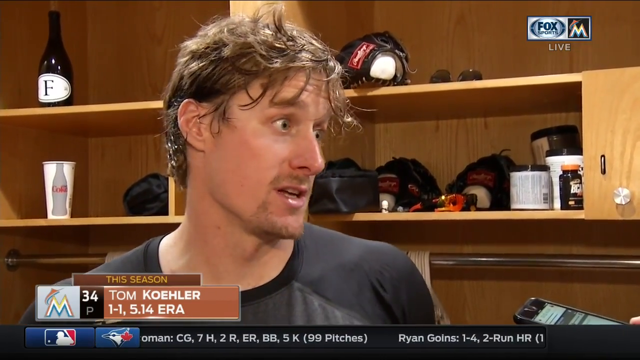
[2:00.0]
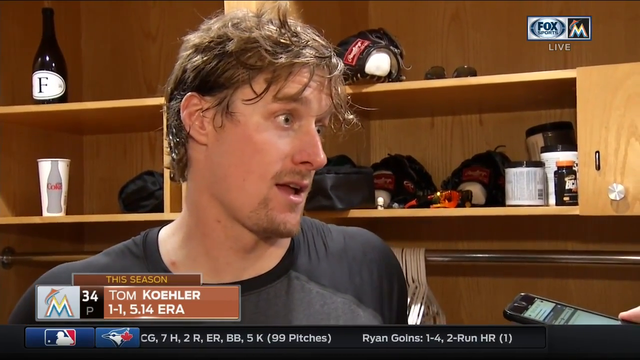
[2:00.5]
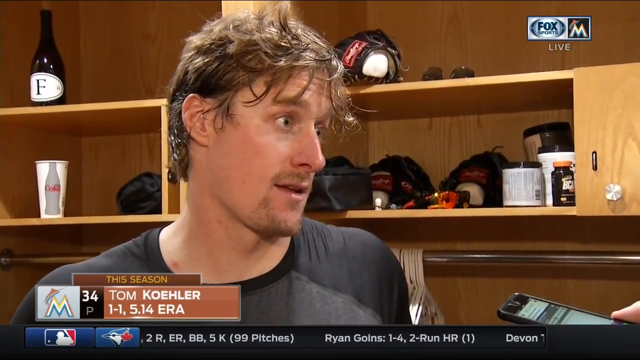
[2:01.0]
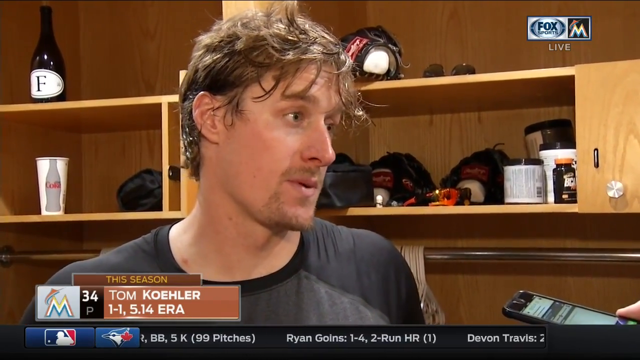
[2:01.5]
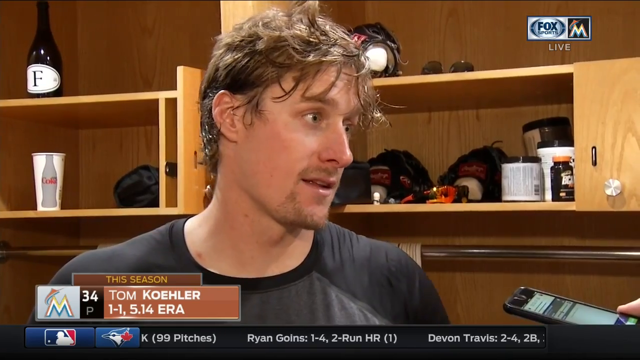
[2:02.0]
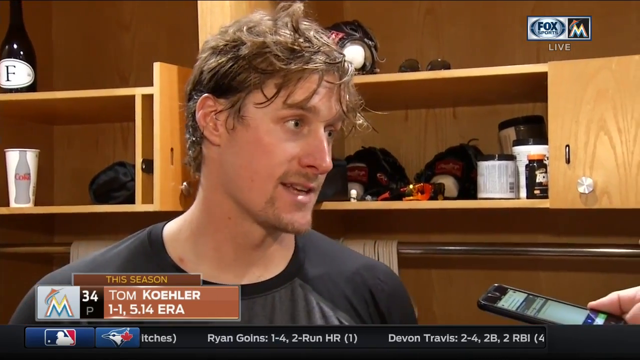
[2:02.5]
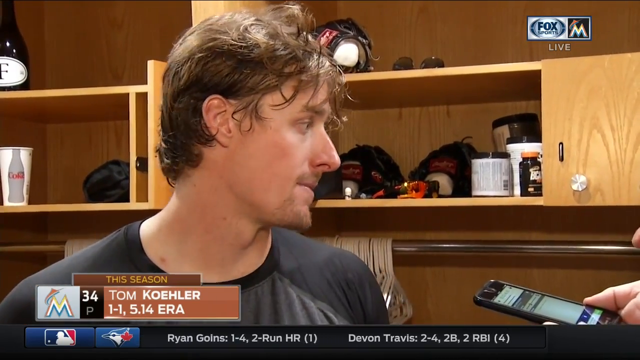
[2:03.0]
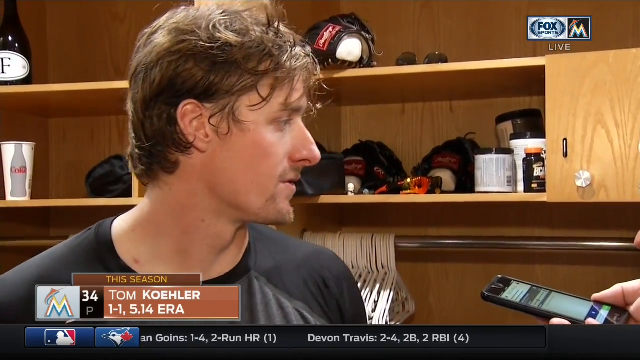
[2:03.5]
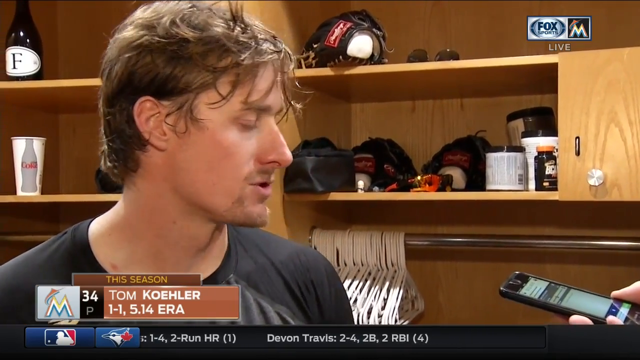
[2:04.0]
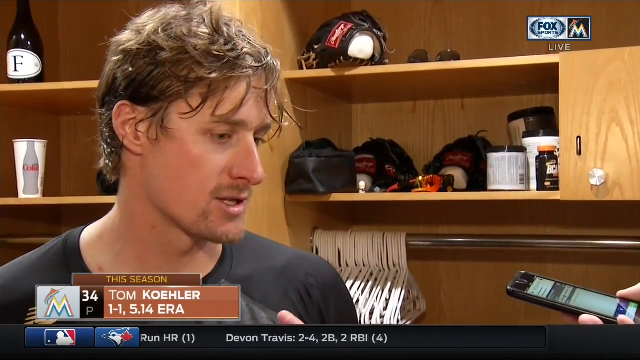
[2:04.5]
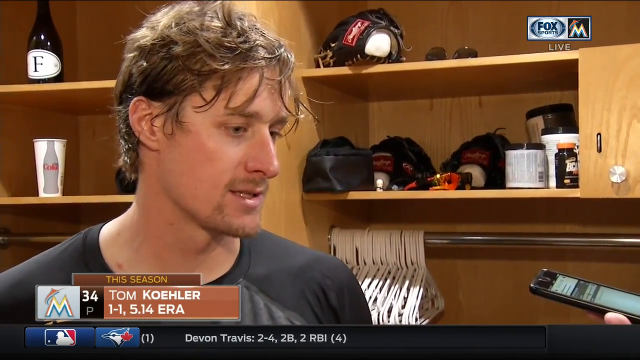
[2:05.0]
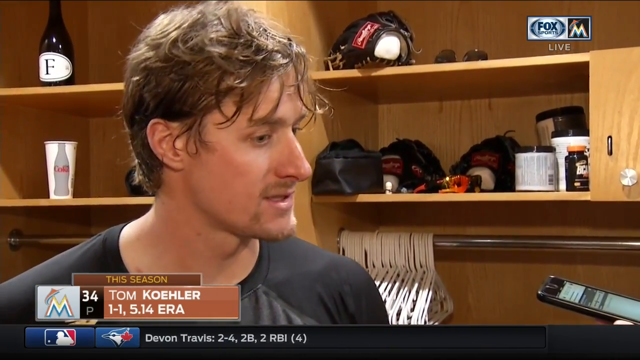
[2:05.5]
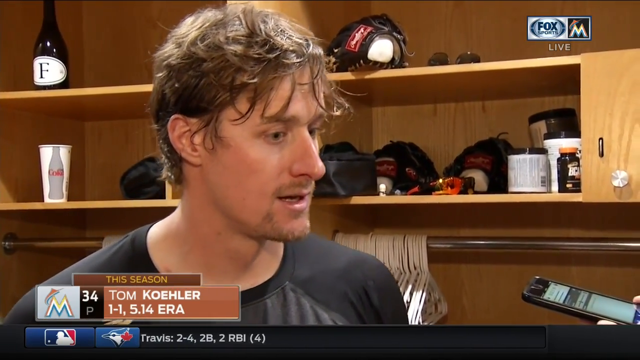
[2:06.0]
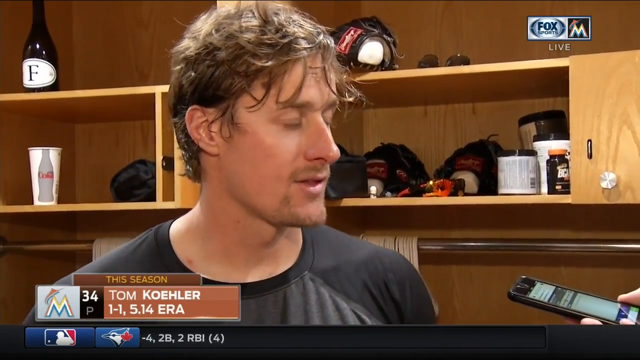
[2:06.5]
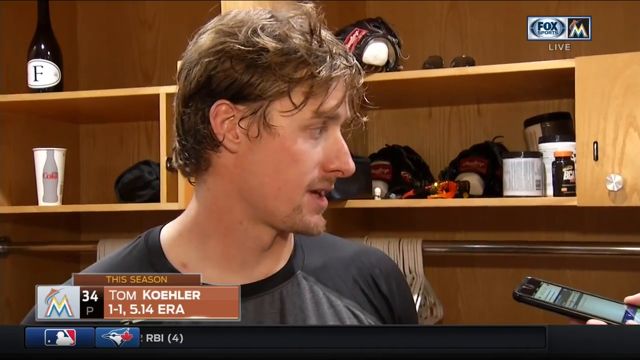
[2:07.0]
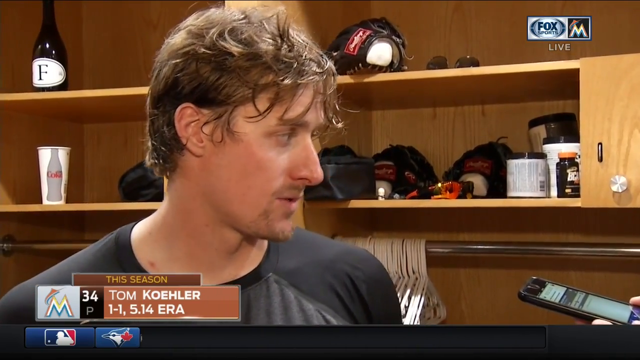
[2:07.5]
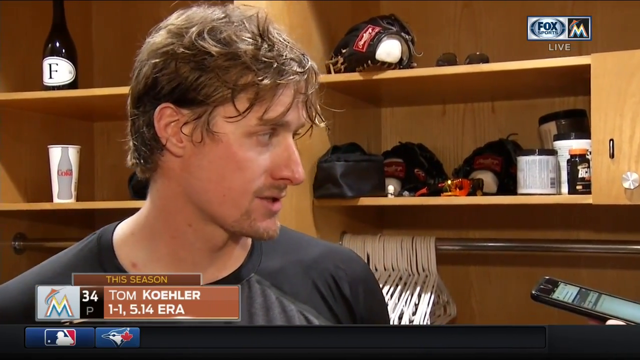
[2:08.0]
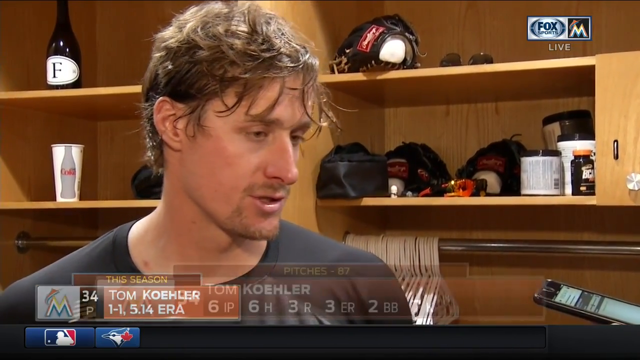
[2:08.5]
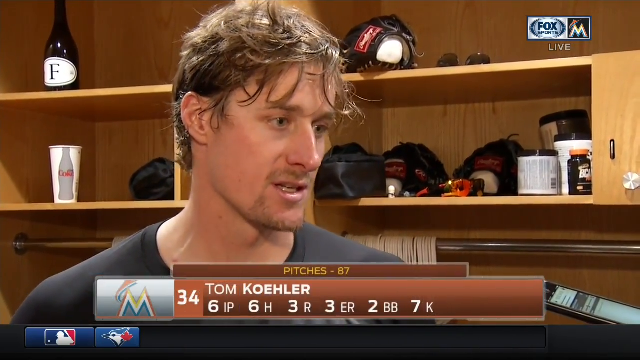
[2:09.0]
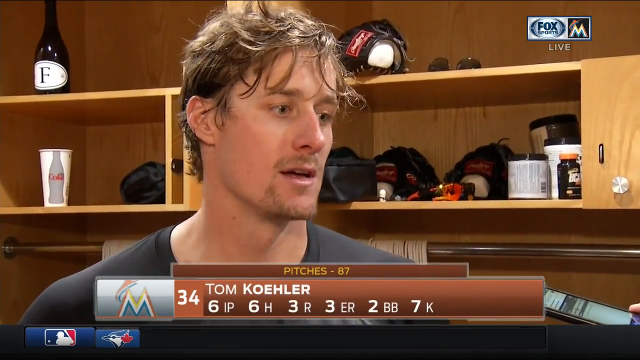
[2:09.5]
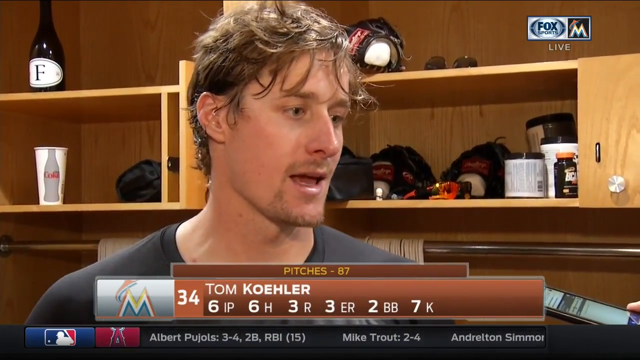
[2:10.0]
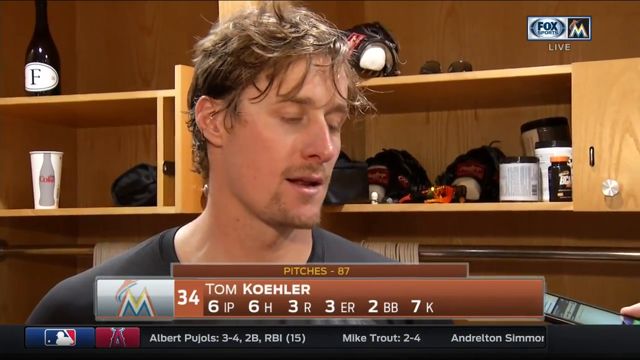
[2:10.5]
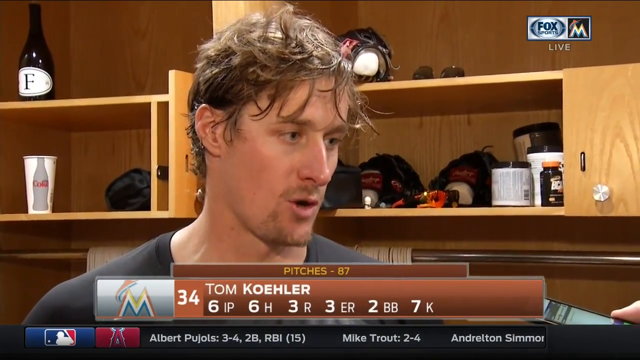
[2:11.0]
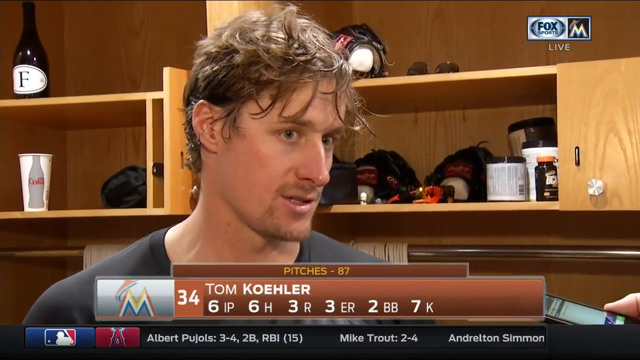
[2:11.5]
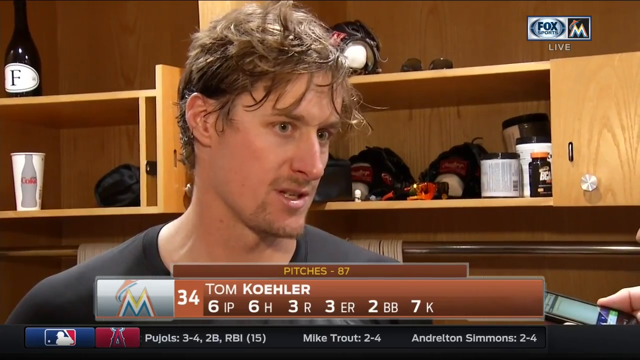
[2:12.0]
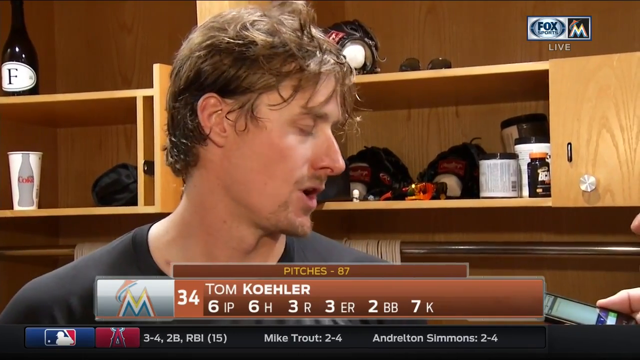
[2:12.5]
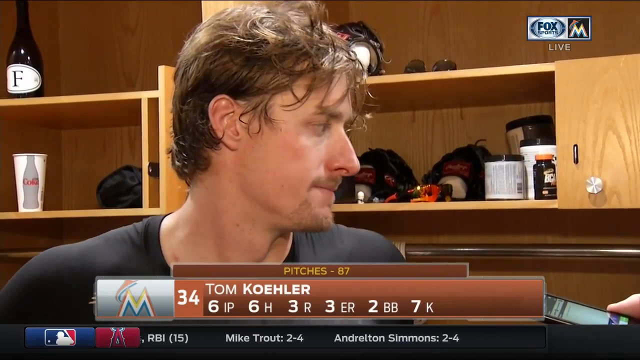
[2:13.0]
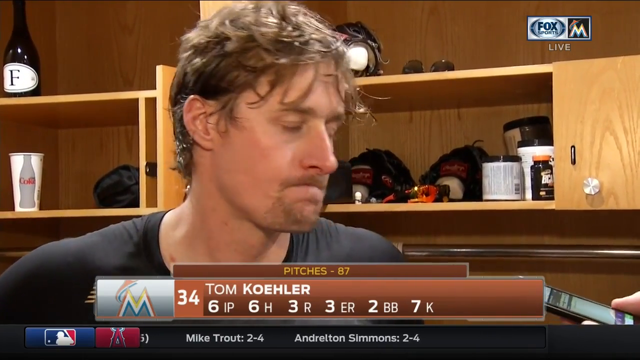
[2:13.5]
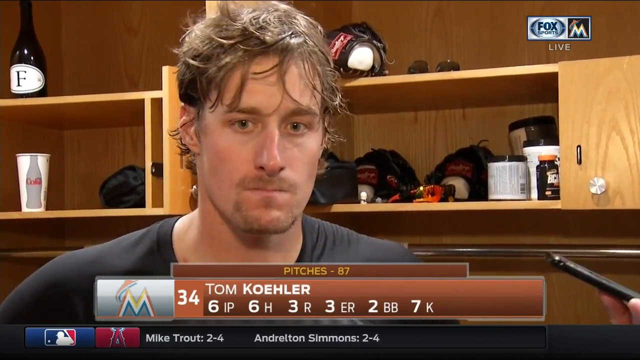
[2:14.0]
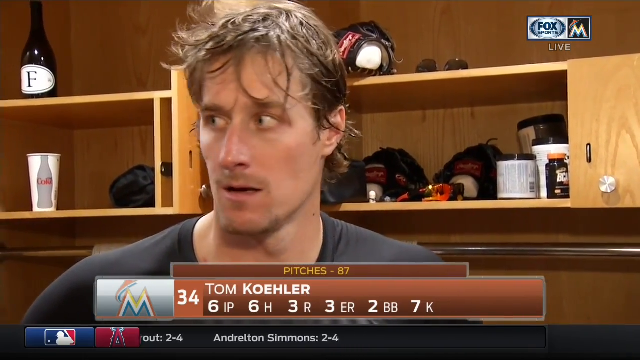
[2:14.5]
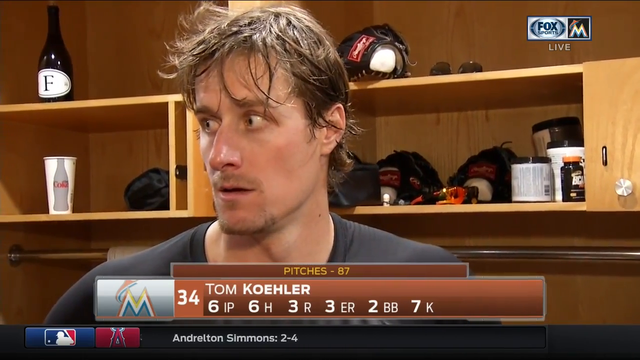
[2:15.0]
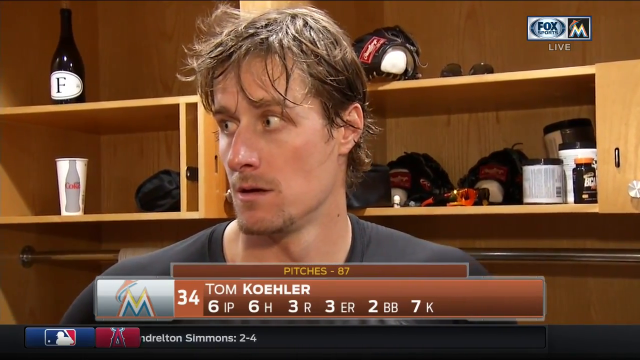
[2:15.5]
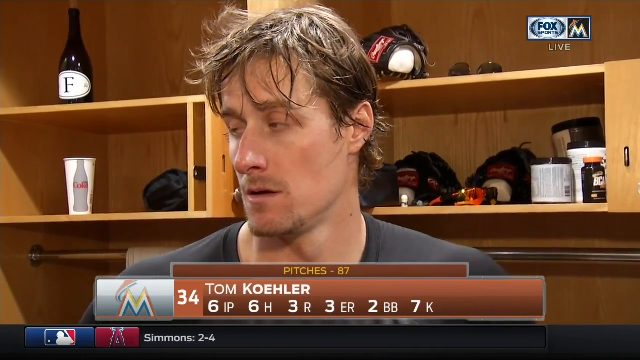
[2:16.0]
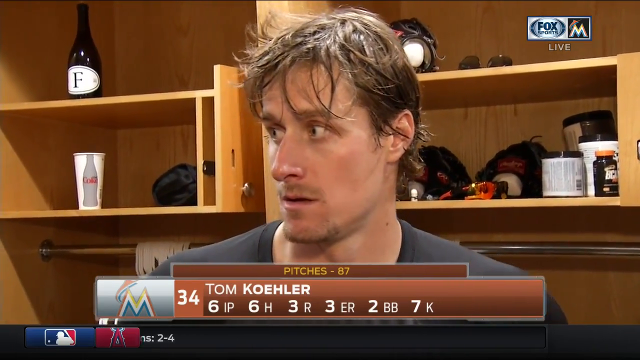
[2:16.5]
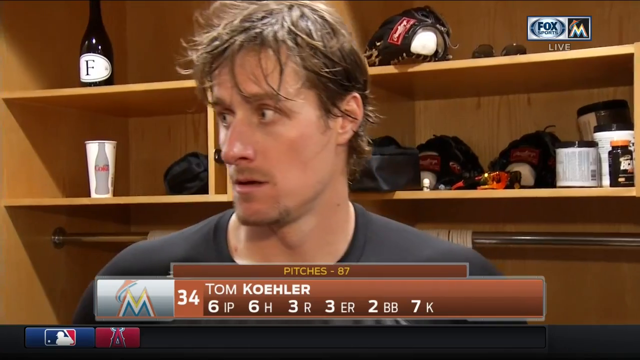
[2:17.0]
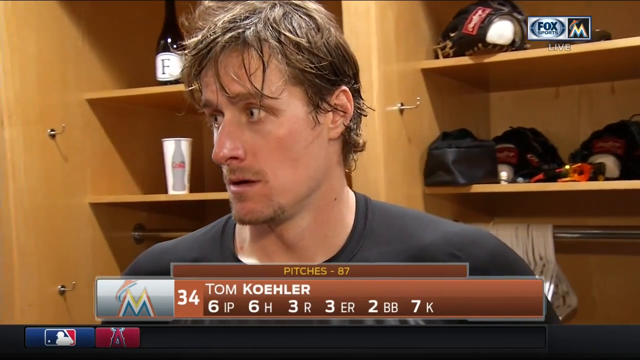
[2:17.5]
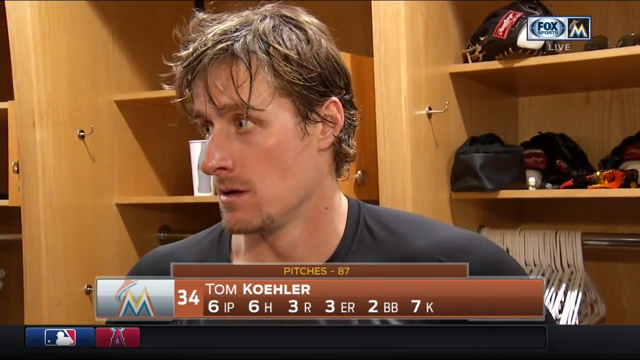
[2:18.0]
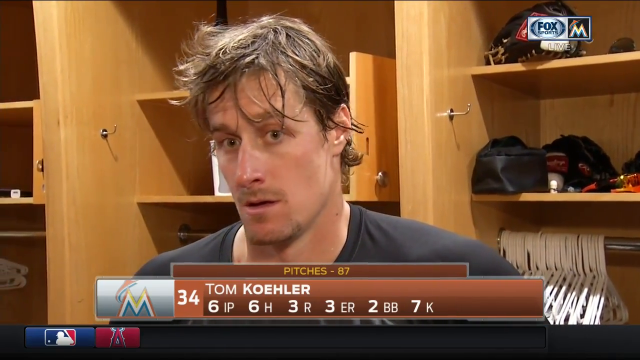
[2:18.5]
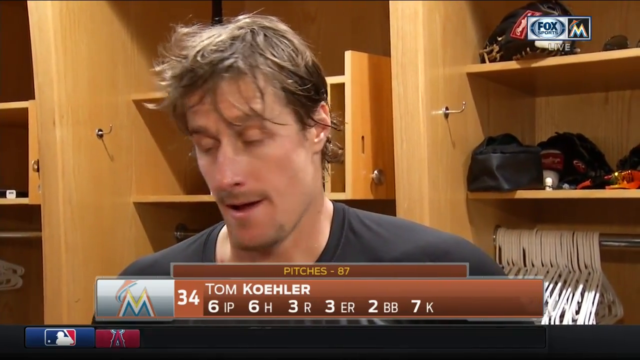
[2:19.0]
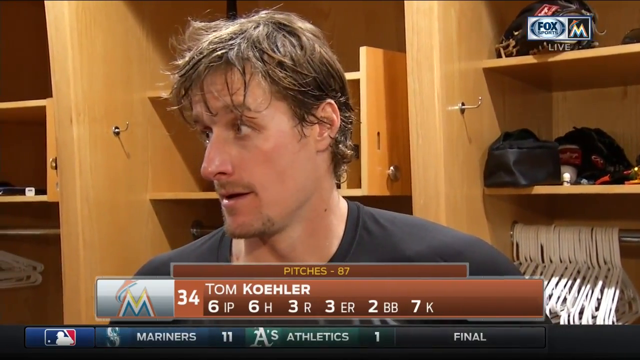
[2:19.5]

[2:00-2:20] He continues talking to the reporter, of whom only the hand and iPhone are visible. His statistics are back up, and the running ticker at the bottom of the screen gives statistics from various games, moving too quickly to identify them all; Albert Pujols is among the names. It shows a completed game between the Mariners and the Athletics: the Mariners beat the Athletics with 11 runs, the Athletics having fewer. White hangers are now also visible on the right side of the two cabinets, which are divided left and right: it looks like about 20 empty white plastic hangers to the right of Tom Kohler, previously blocked by his body.